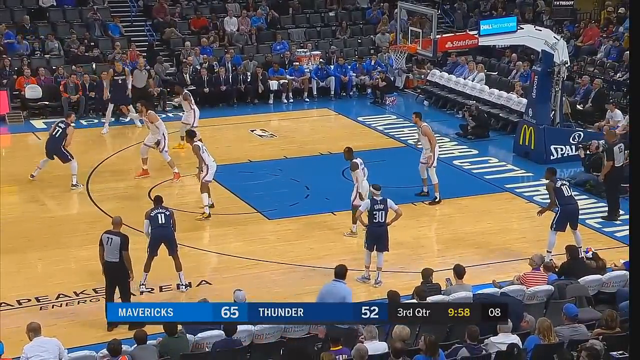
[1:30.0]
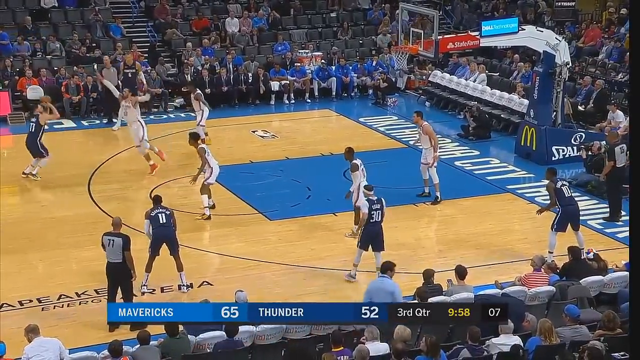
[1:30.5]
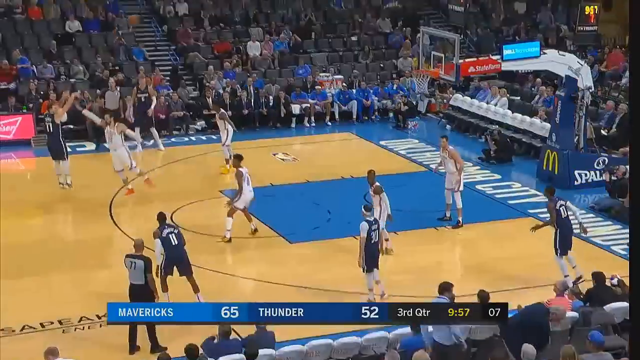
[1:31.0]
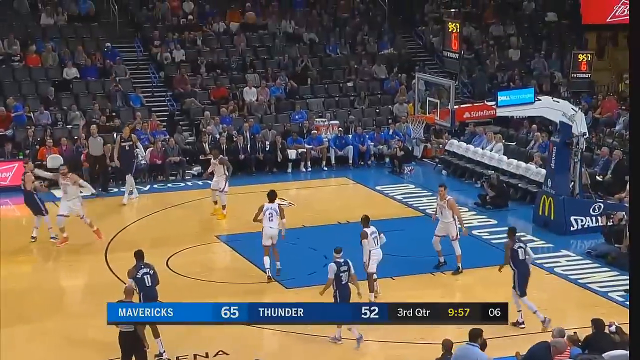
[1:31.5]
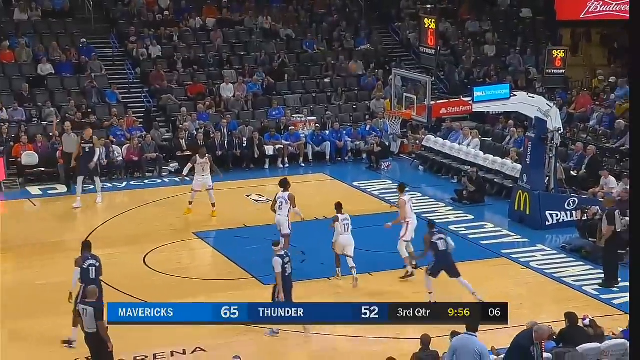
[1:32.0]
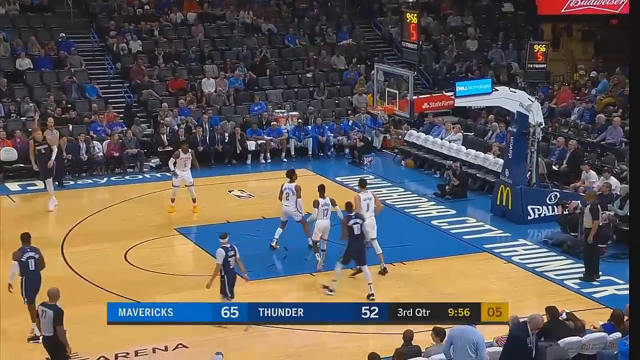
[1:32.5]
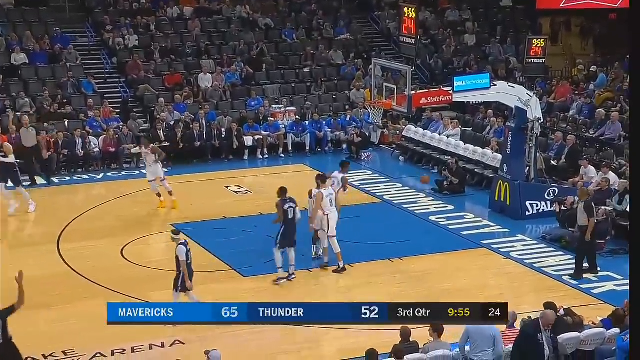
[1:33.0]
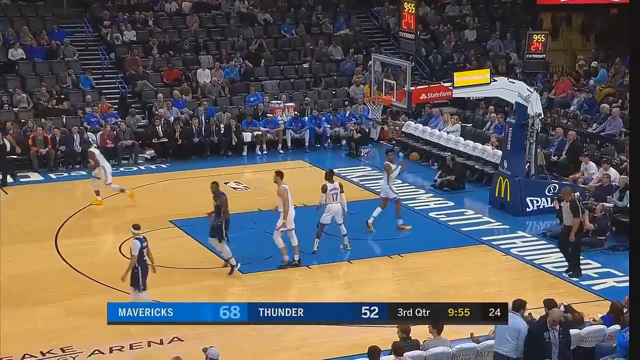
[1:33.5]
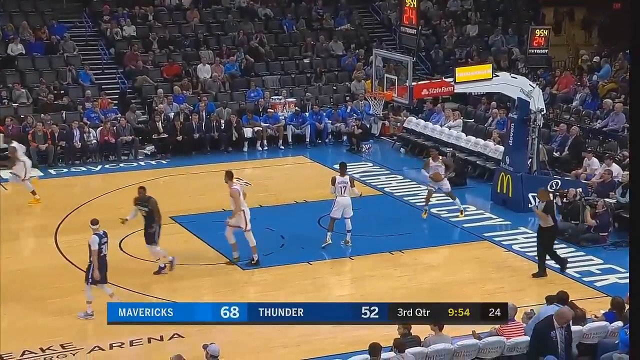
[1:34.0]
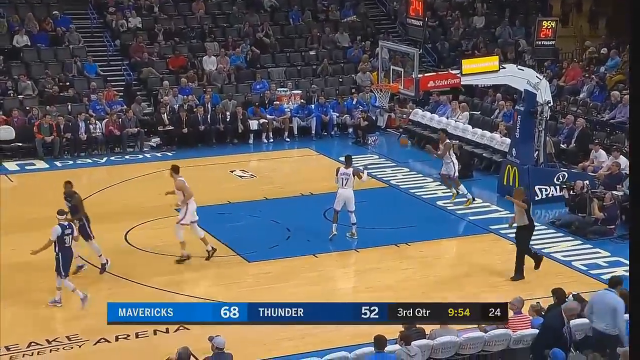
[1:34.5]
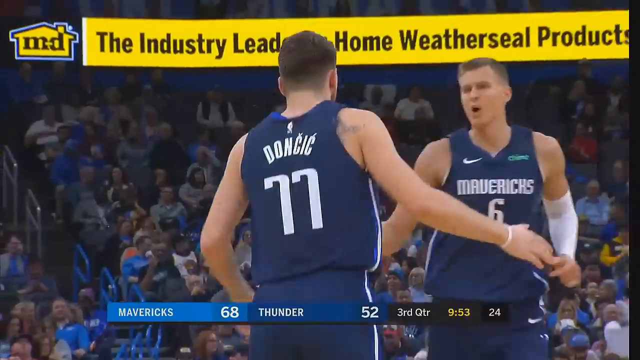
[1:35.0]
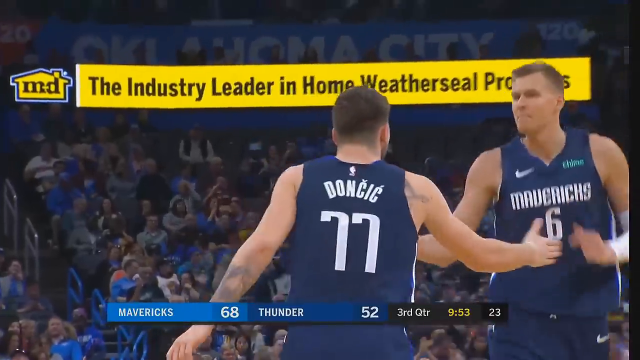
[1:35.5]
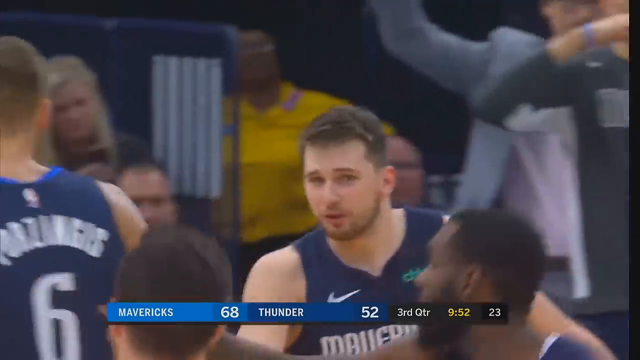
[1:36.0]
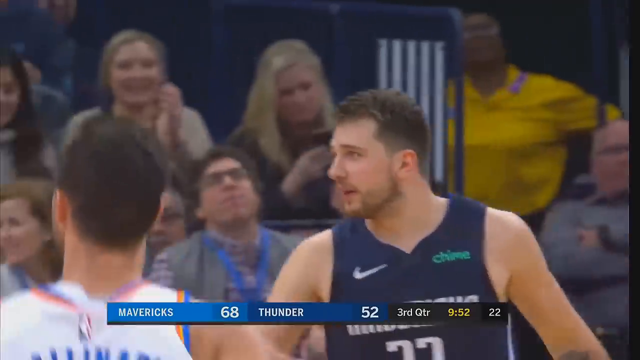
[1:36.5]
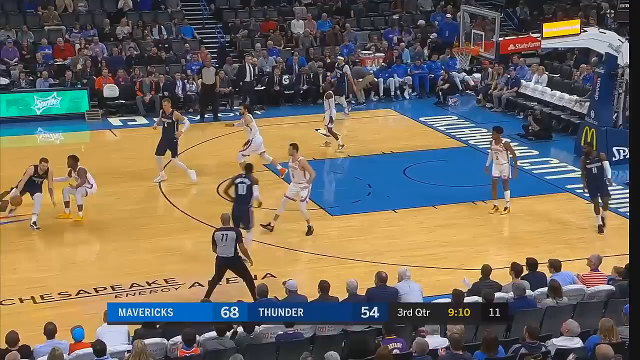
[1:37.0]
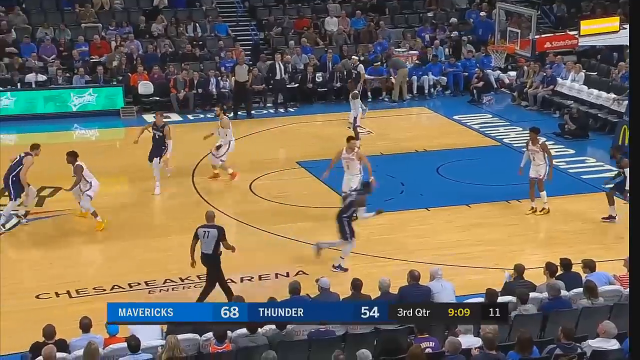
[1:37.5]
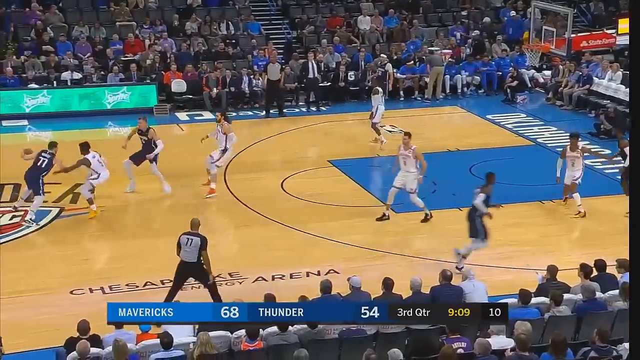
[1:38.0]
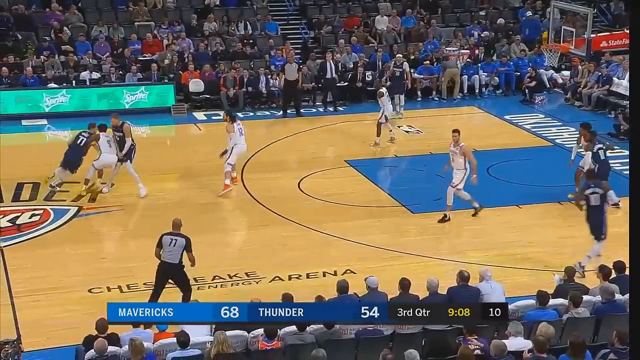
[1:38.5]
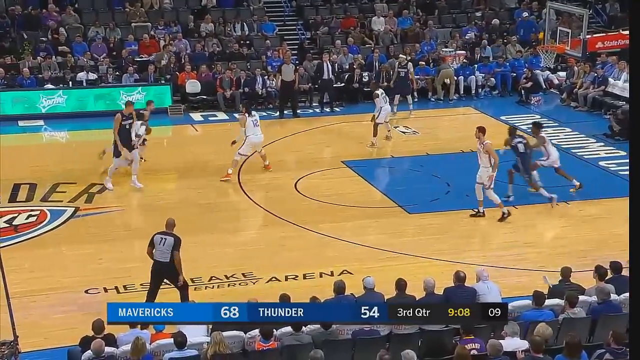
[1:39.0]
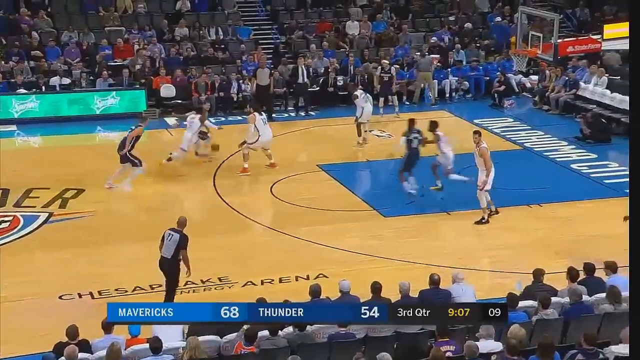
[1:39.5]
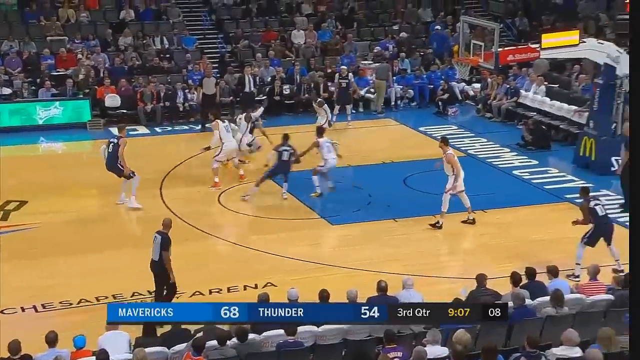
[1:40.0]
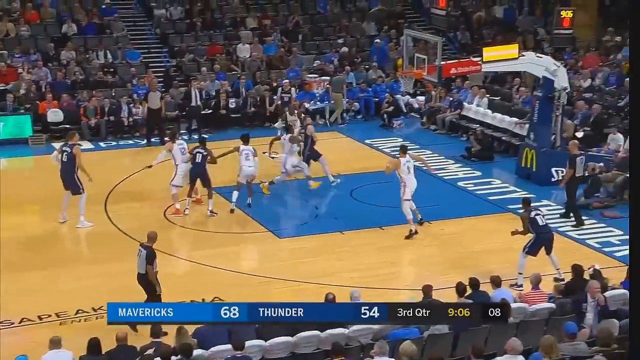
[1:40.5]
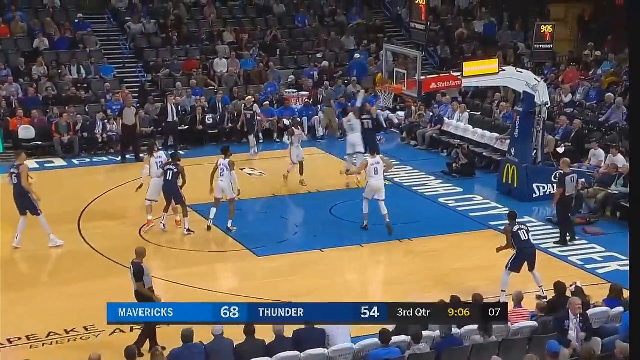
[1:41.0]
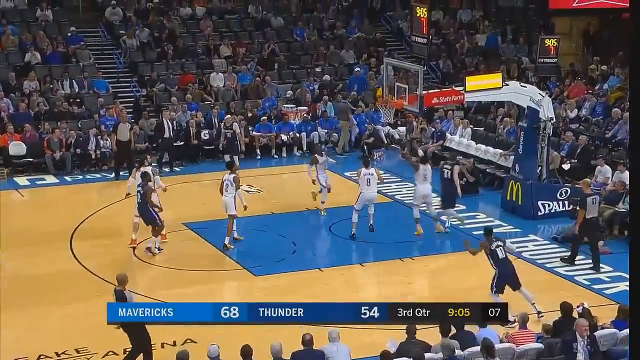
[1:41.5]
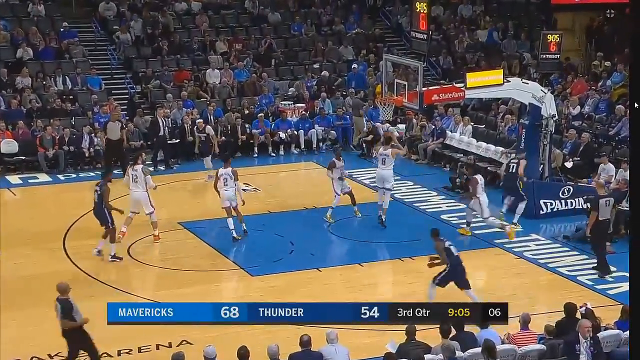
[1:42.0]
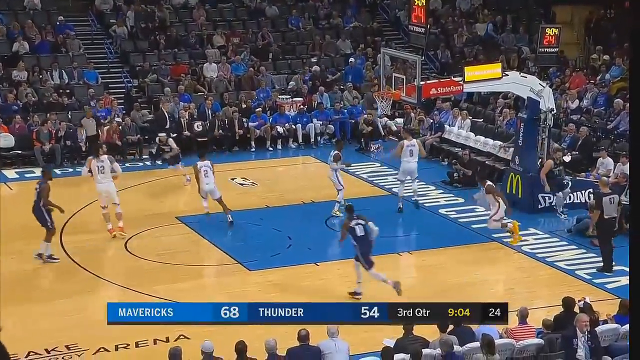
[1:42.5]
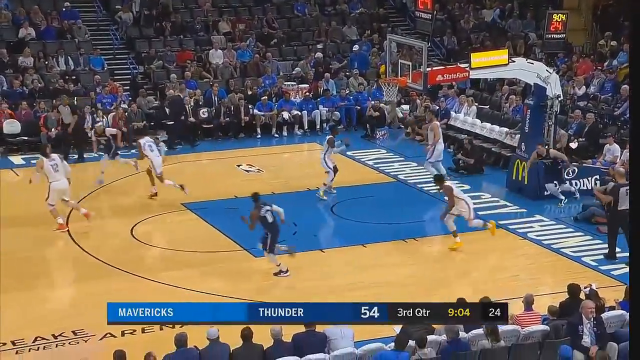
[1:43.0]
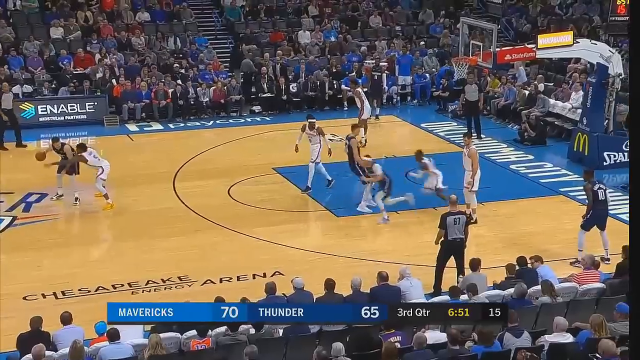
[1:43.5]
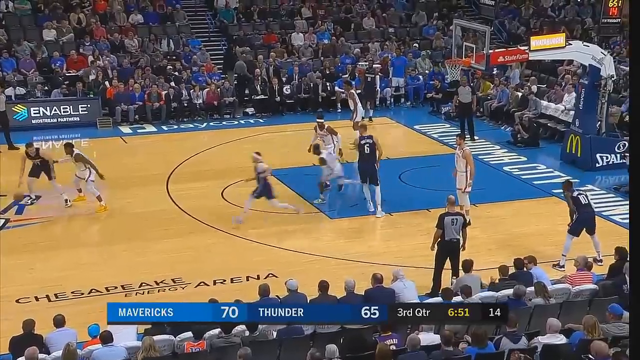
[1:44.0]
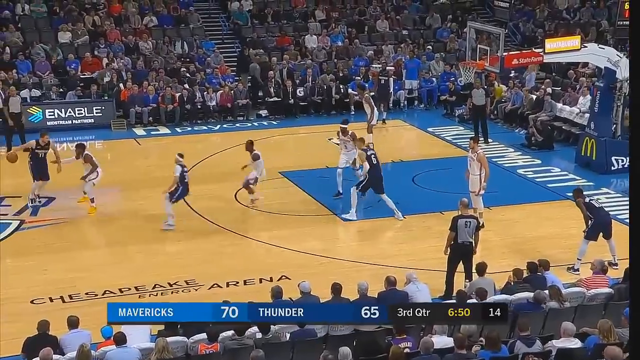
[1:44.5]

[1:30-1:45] Doncic hits another three-point shot and gets a hand slap from one of his teammates. Doncic looks rather happy after the hand slap; they say something to one another, and he has a slight smile. After the three-pointer, well into the third quarter, the score is 68-52. Later he makes a running layup underneath the basket and almost hits the stanchion, after which the score becomes 70-65 with 6 minutes and 50 seconds left in the third quarter. The Oklahoma City bench is sitting with warm-ups on, not showing much enthusiasm at all.